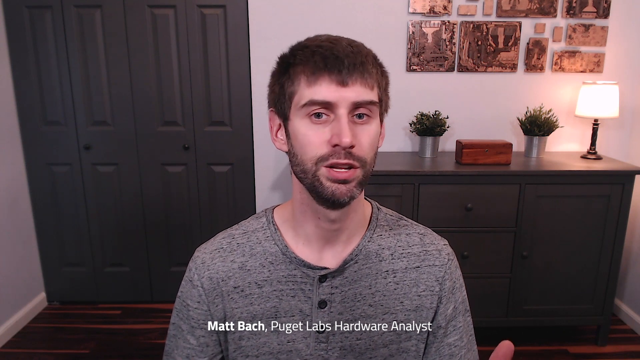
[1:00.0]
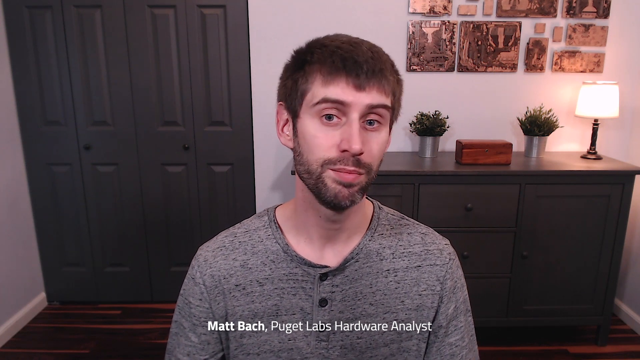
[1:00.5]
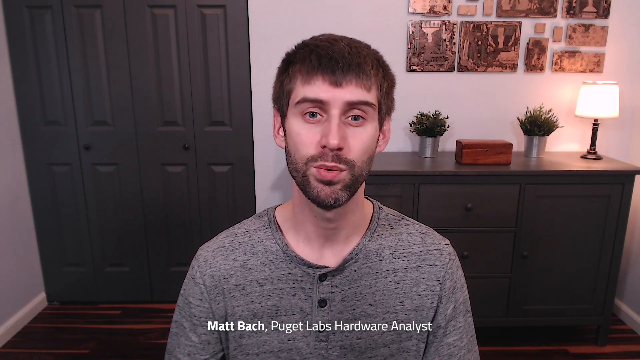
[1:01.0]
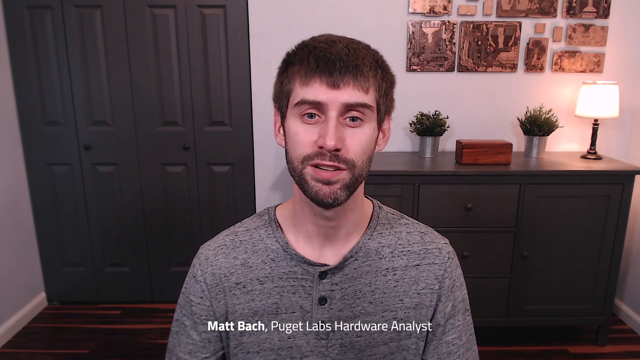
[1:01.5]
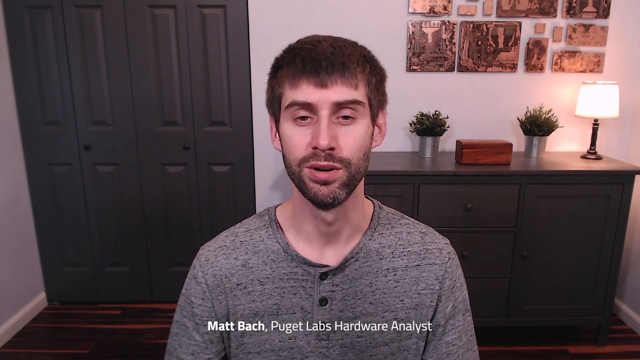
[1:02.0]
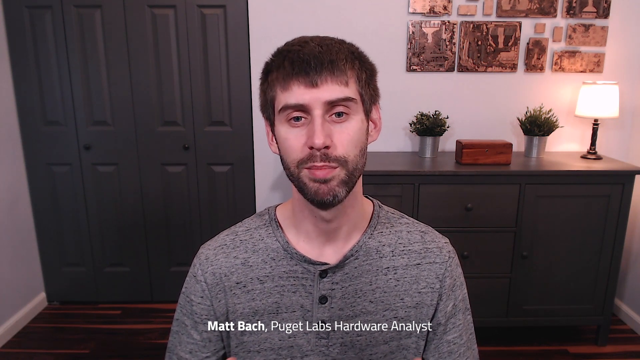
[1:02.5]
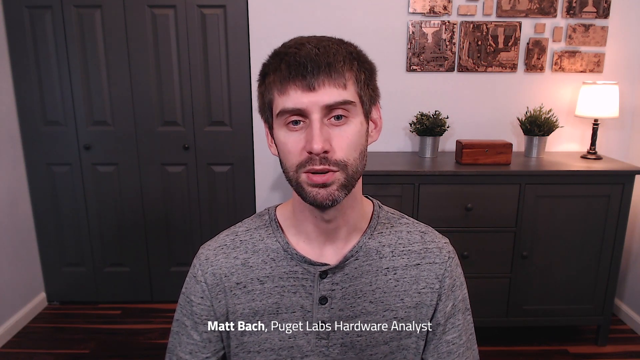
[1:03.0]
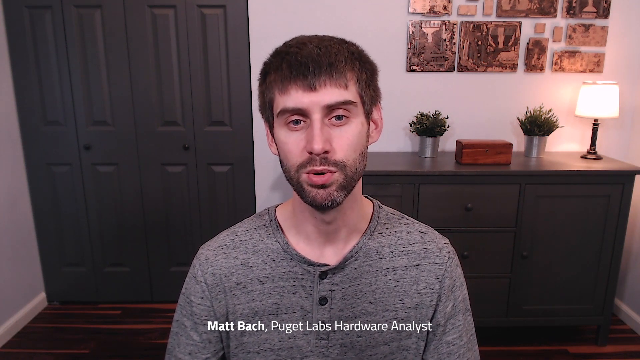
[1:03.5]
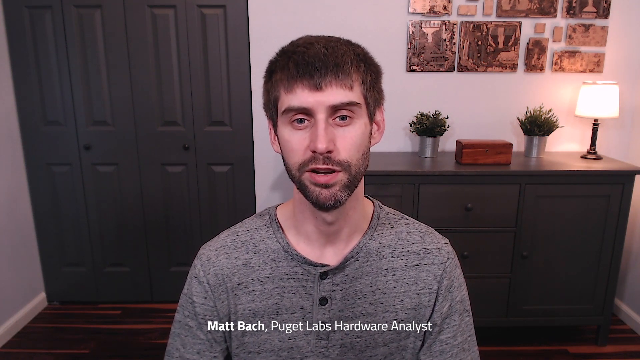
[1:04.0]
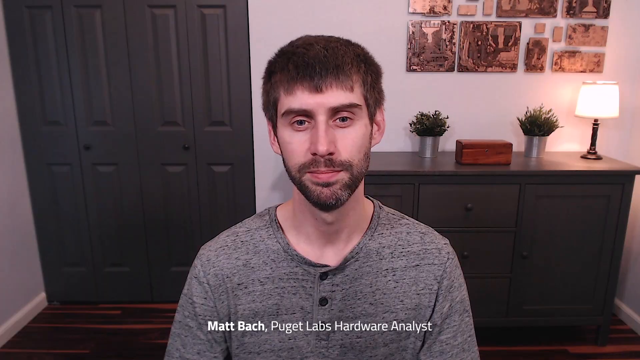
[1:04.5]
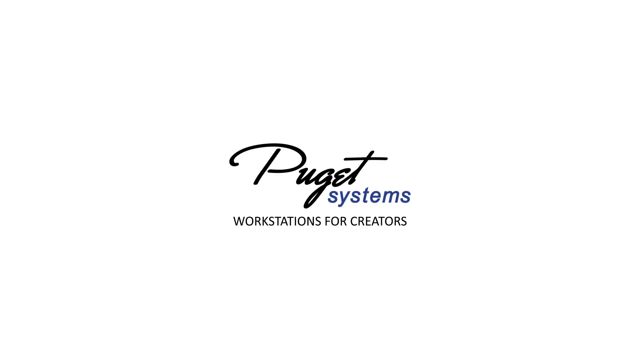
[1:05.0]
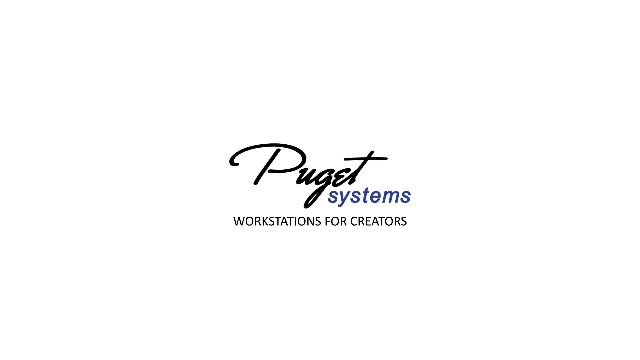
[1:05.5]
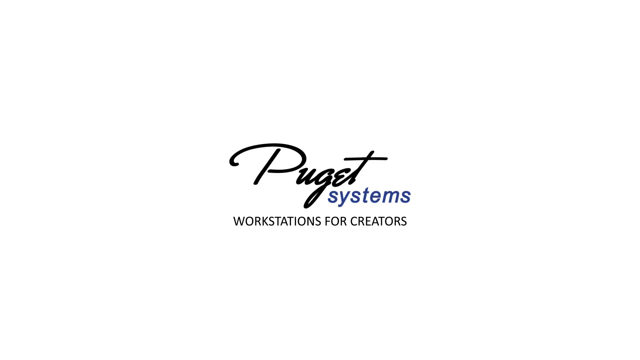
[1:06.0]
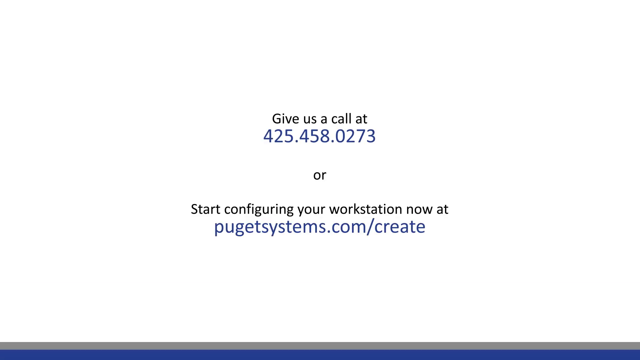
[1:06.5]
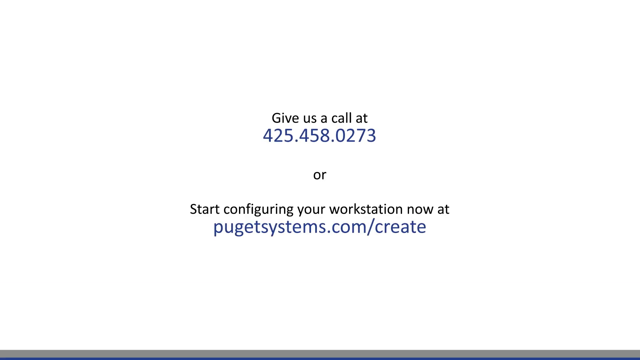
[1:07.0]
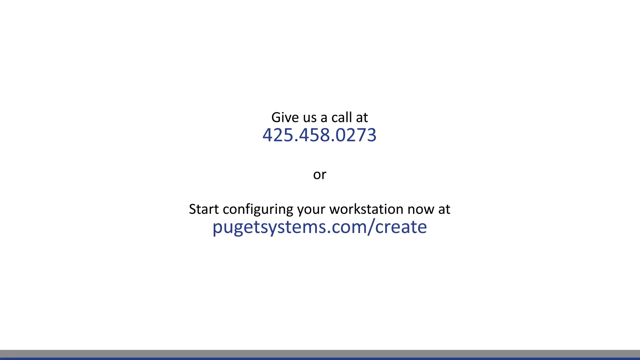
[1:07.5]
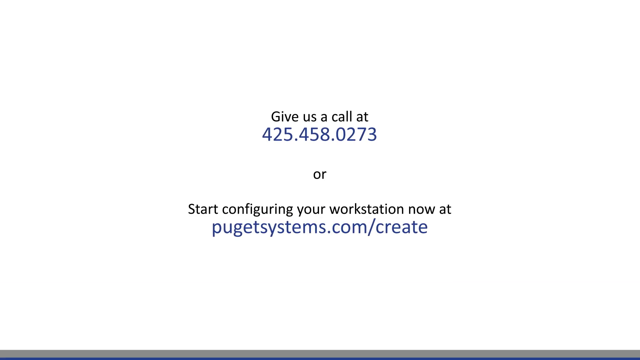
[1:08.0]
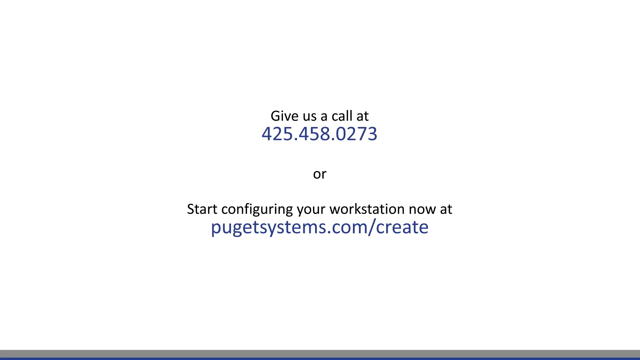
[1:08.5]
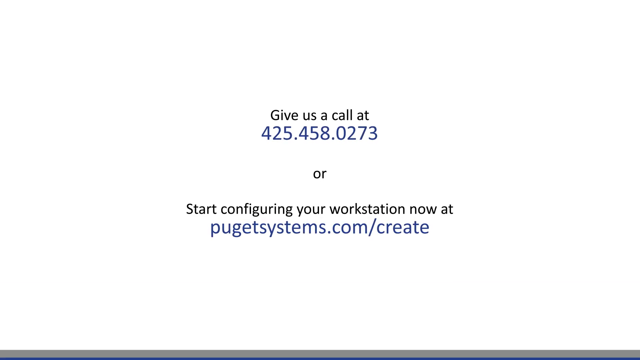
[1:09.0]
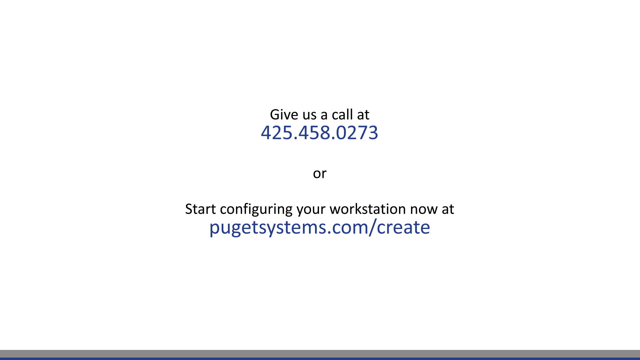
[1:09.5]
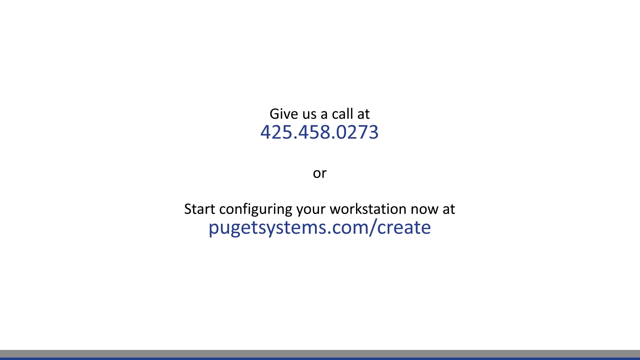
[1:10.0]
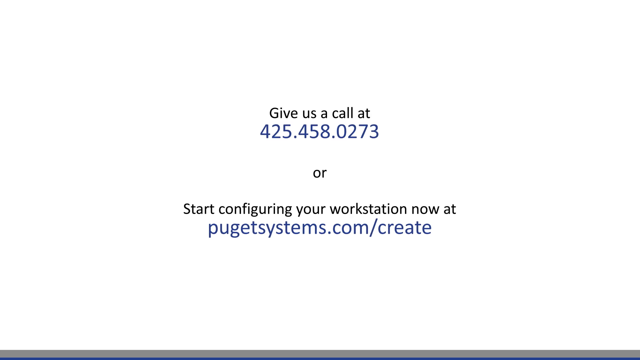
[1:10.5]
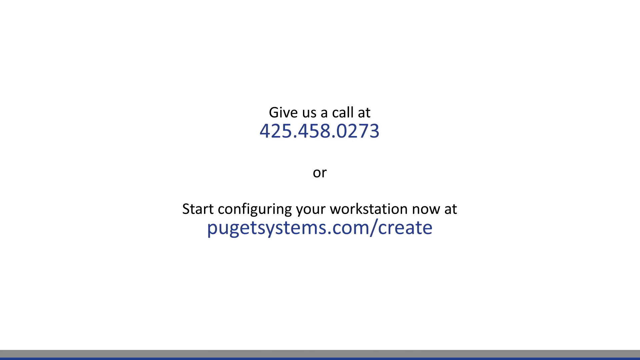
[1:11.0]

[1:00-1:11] A background is shown that apparently presents Puget Systems recommending the 5000 series hardware over the Intel hardware.